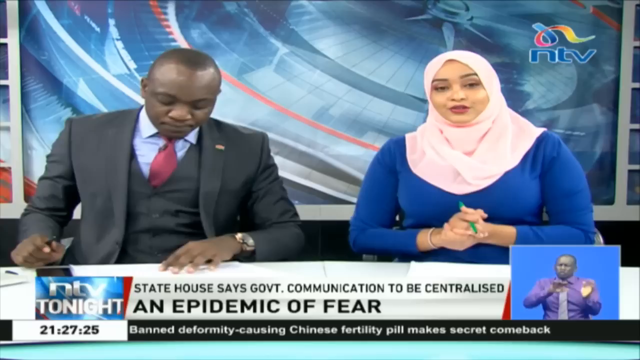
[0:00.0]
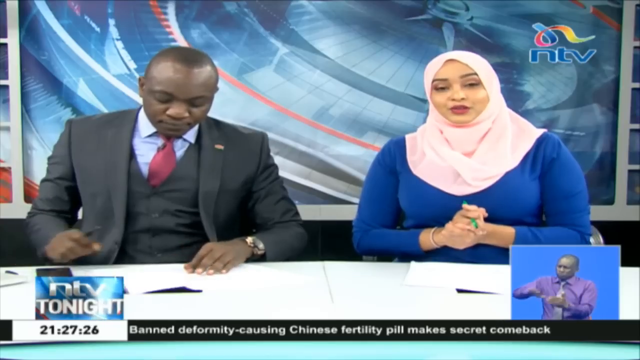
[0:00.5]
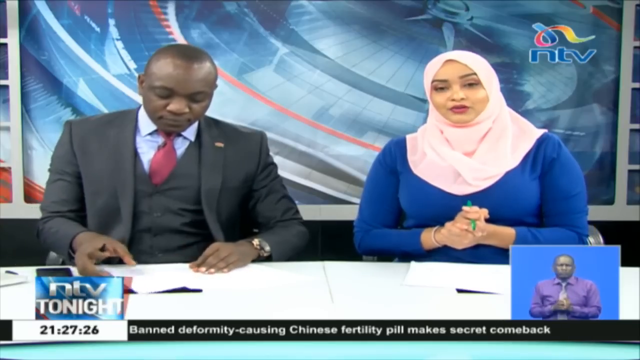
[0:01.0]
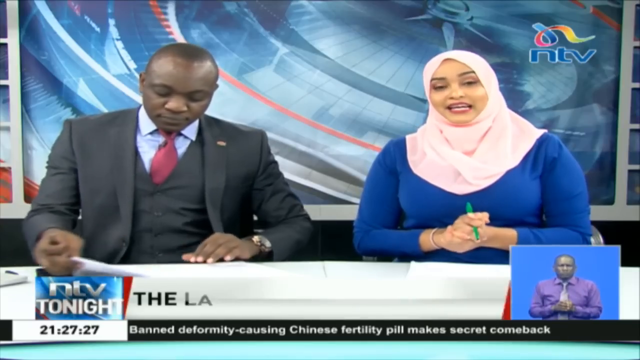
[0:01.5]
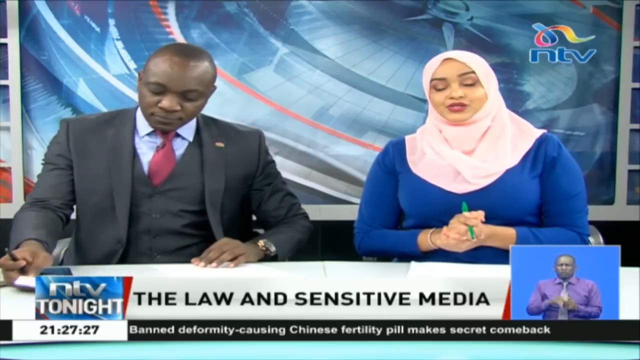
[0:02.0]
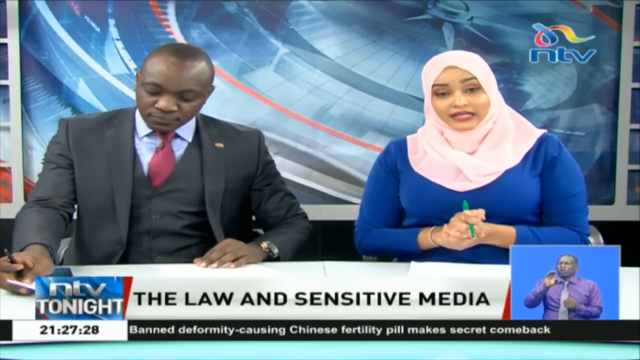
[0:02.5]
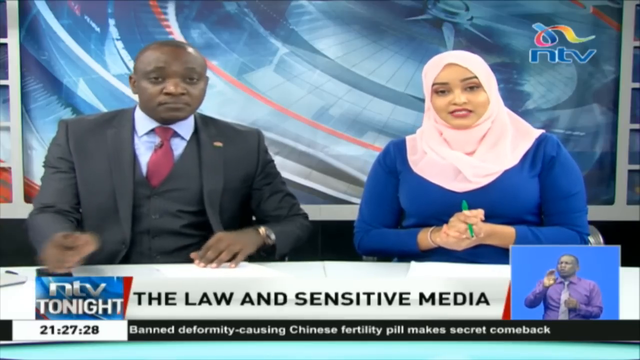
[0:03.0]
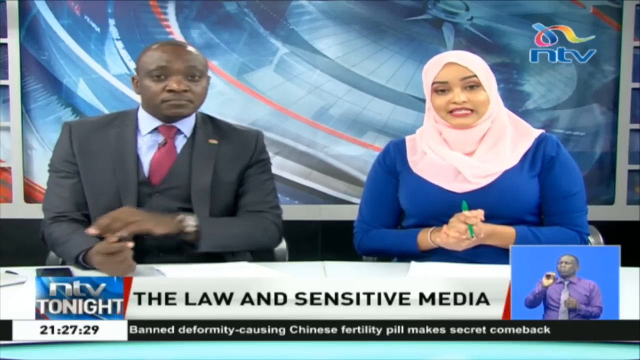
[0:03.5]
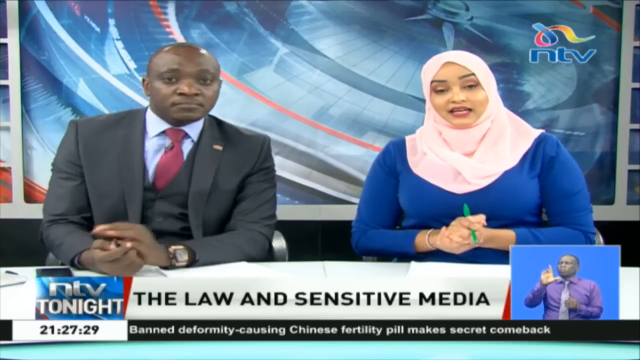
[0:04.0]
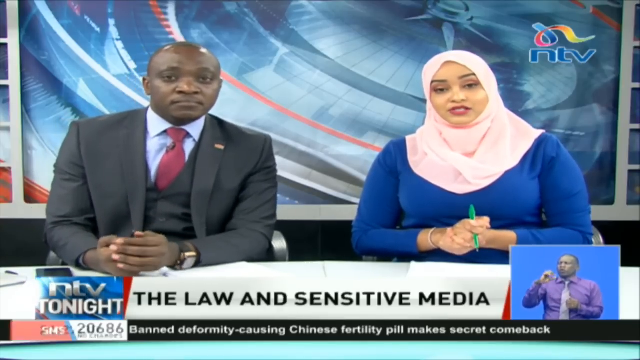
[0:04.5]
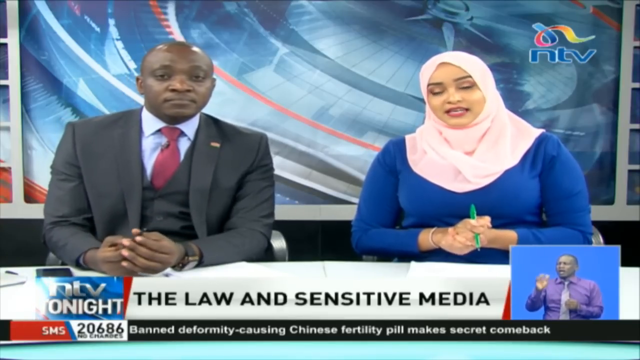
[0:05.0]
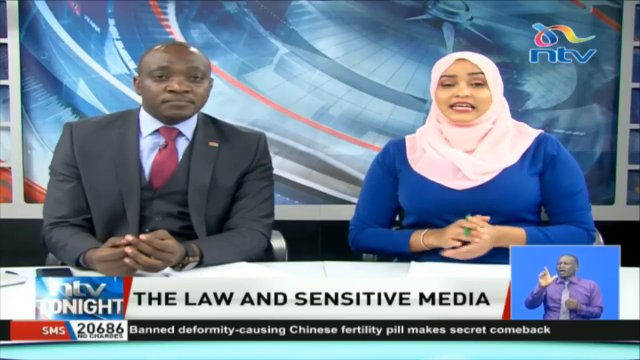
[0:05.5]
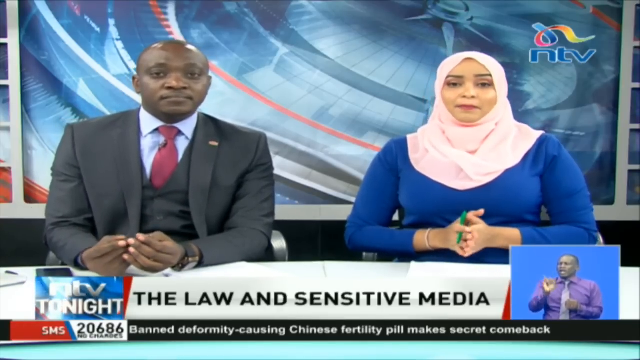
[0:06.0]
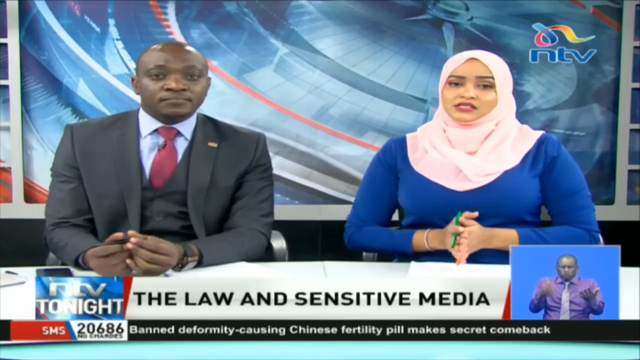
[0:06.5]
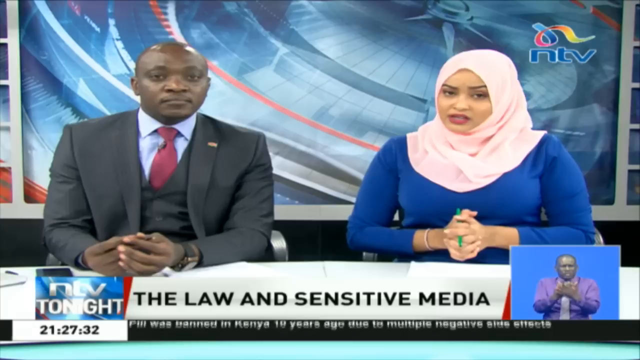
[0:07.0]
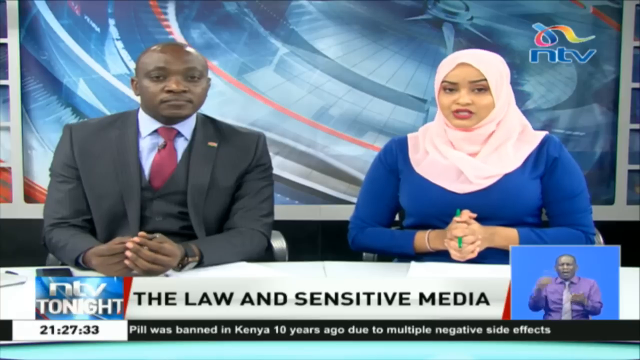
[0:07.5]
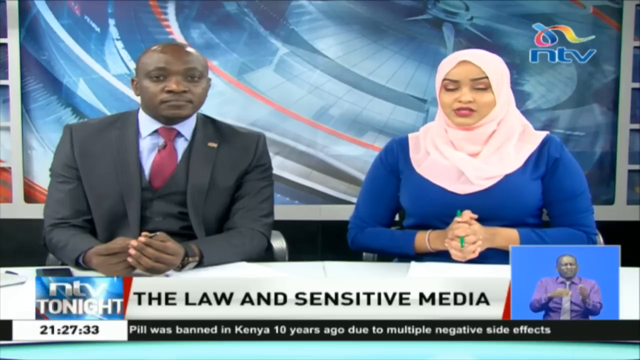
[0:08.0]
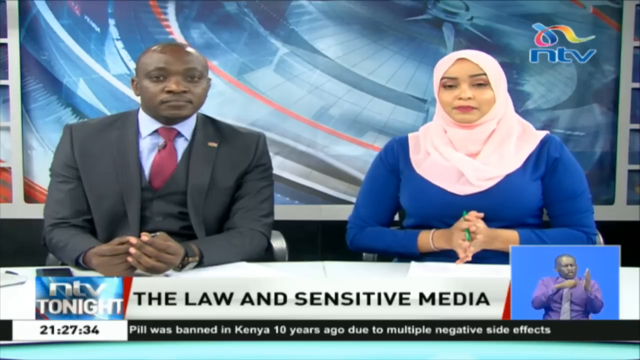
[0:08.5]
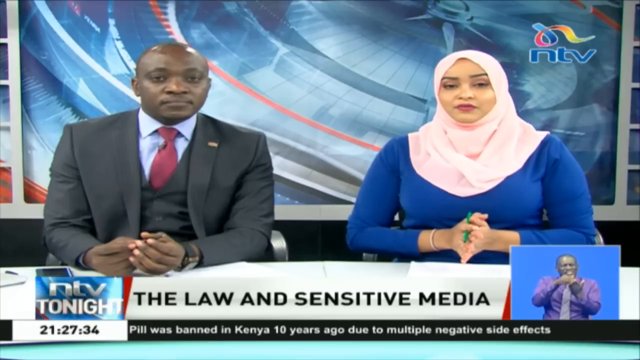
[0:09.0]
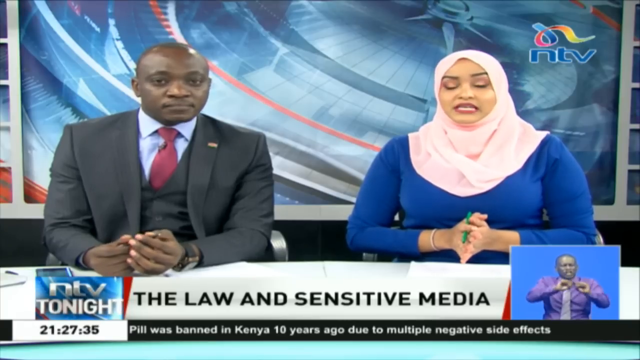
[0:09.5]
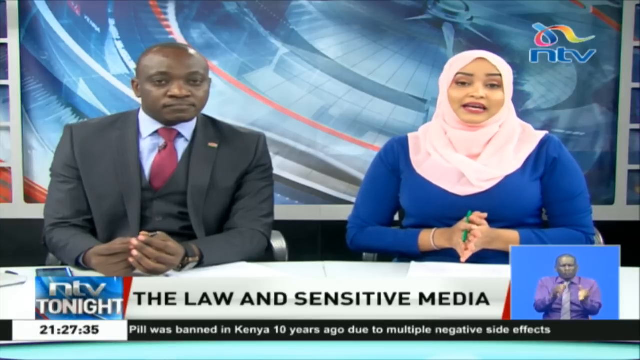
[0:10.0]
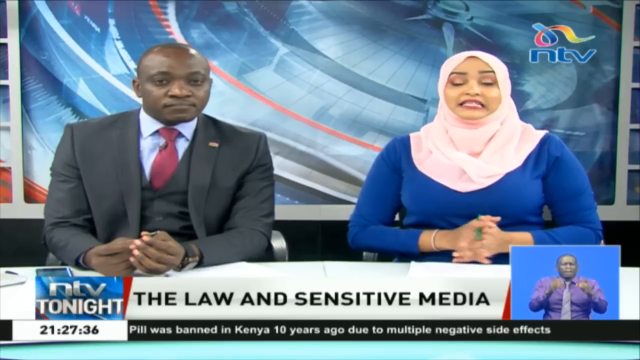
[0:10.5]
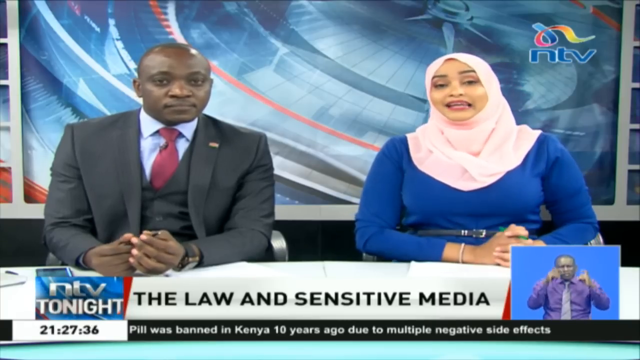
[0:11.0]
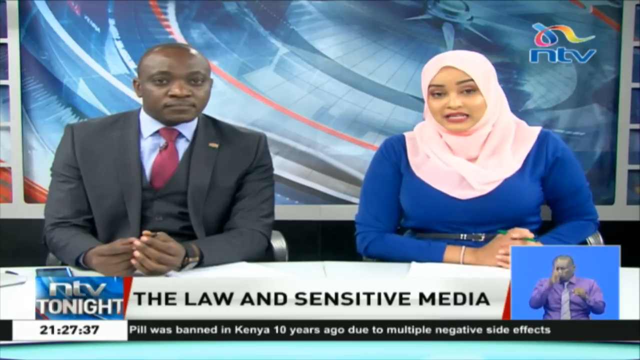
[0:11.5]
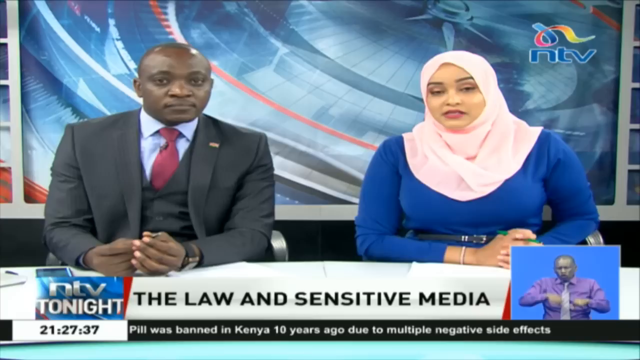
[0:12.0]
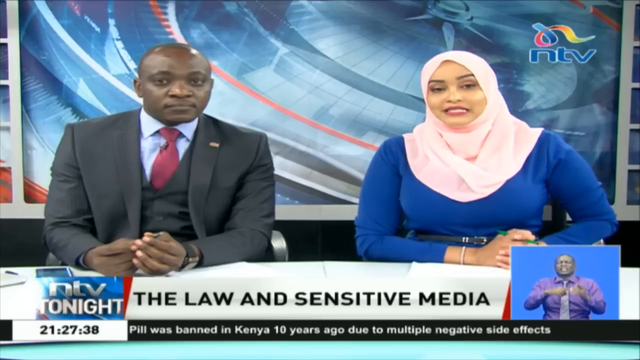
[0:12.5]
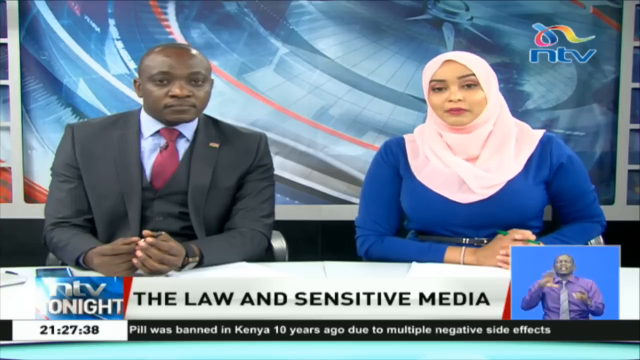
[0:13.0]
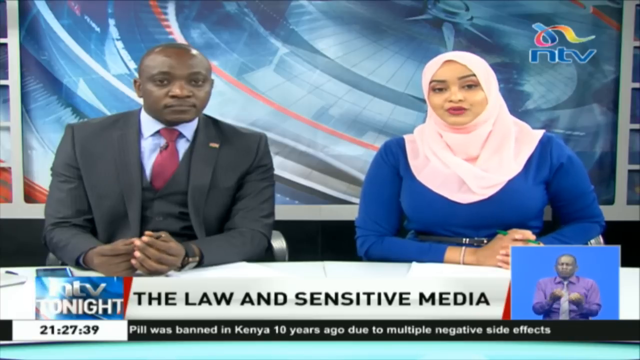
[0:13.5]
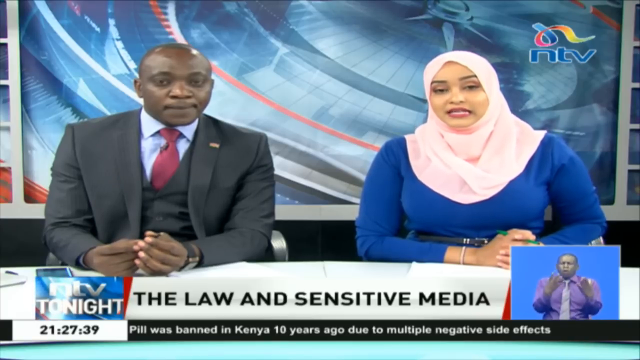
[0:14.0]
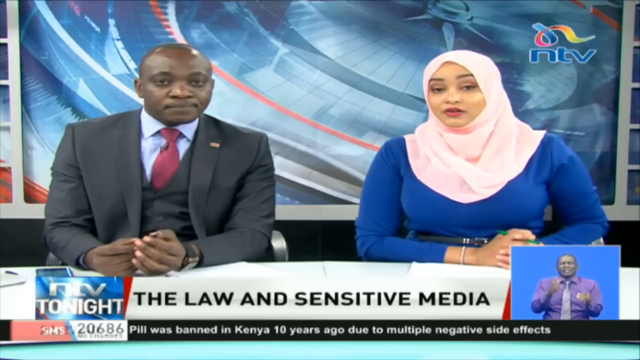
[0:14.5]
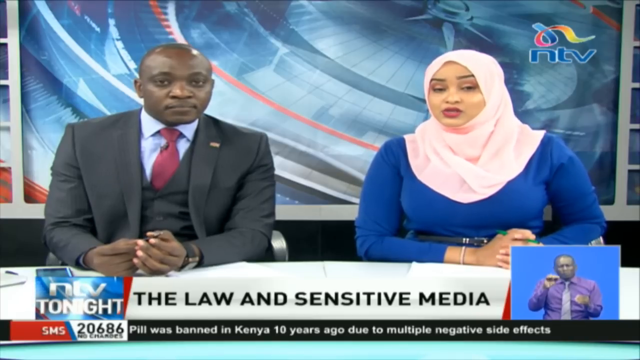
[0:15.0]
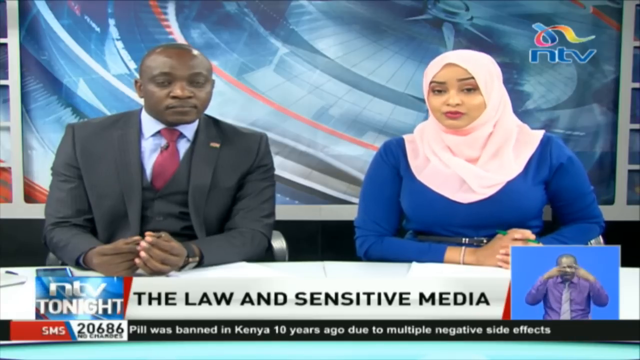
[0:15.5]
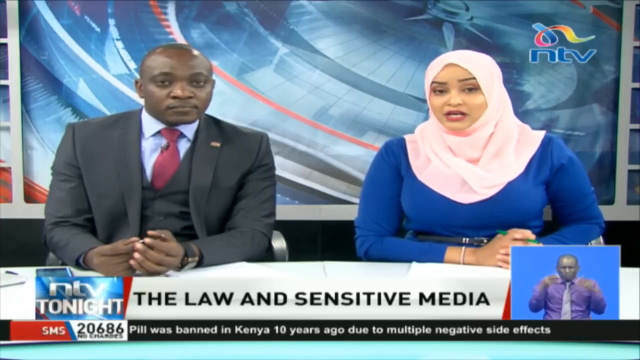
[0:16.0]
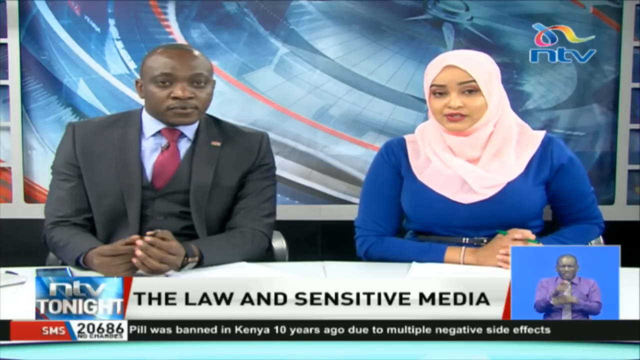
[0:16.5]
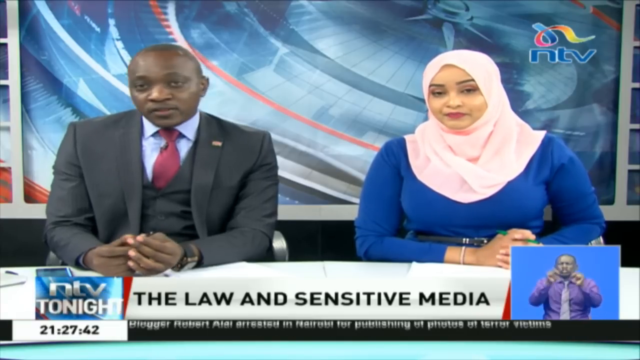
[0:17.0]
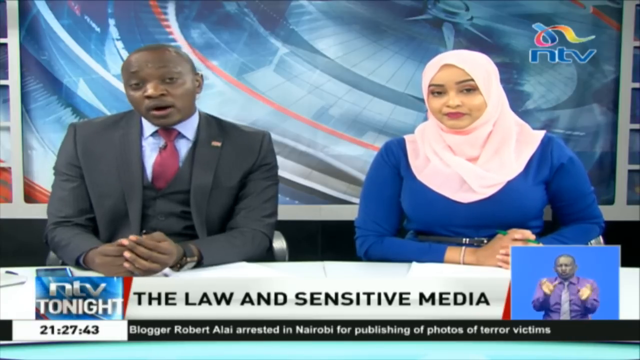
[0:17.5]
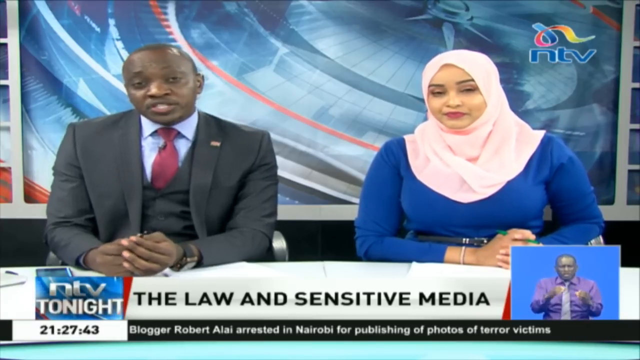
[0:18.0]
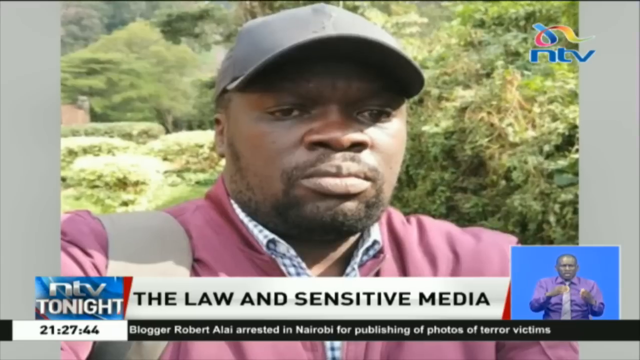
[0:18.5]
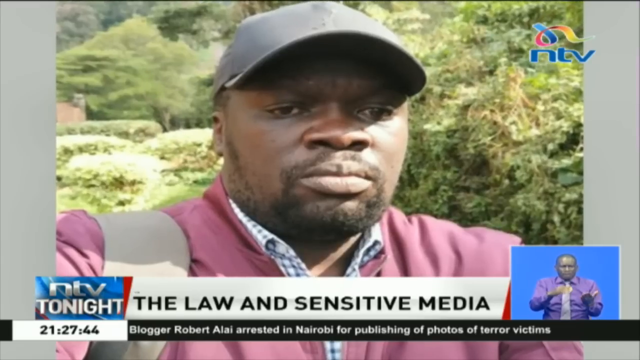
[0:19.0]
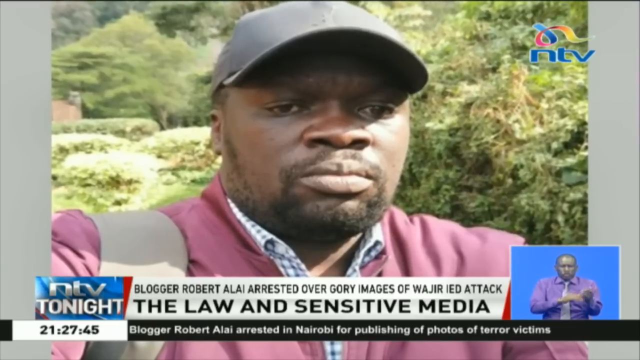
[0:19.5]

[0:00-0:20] A news report shows two people sitting at a news desk, a woman on the right and a man on the left. In the lower right corner, a picture-in-picture shows a man in a purple shirt against a blue background, using his hands to sign, translating what is being said. The text on the bottom banner reads "The law and sensitive media," and at the very bottom of the screen it reads "Banned deformity causing Chinese fertility bill makes secret comeback." The woman, on the right in a blue shirt, is talking; the man on the left wears a dark suit with a red tie. Both look at the camera. The woman has her hands clasped in front of her and holds a green pen in one hand while she talks. "NTV Tonight" appears in the lower left of the screen. The banner in the center then changes to read "The law and sensitive media. Blogger Robert Alai arrested over gory images of Wajir IED attacks." A man in a maroon shirt and a gray hat appears on screen, looking roughly at the camera; he appears to be taking a selfie, with what looks like a forested area behind him.